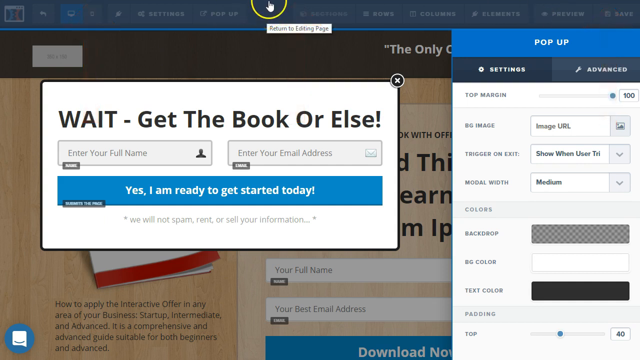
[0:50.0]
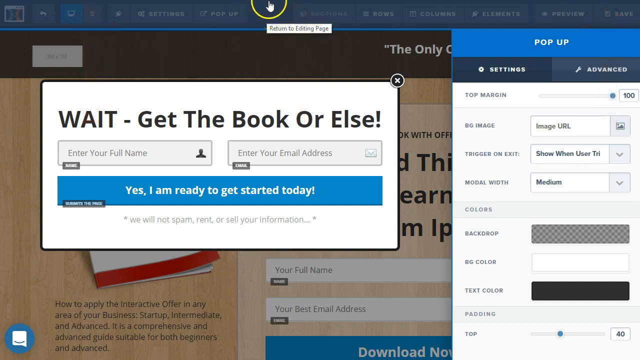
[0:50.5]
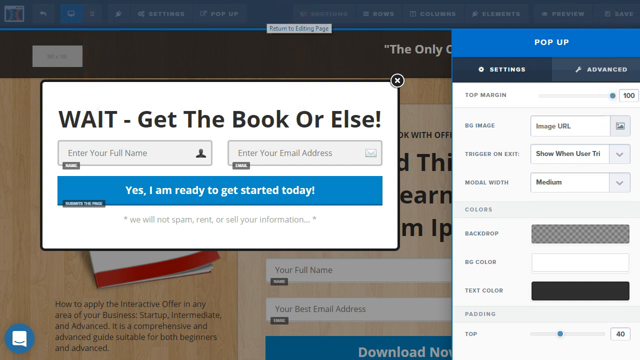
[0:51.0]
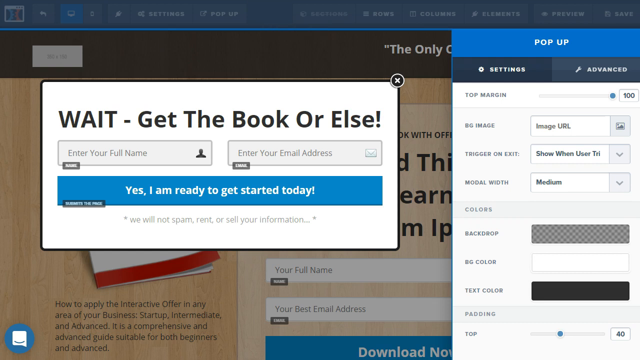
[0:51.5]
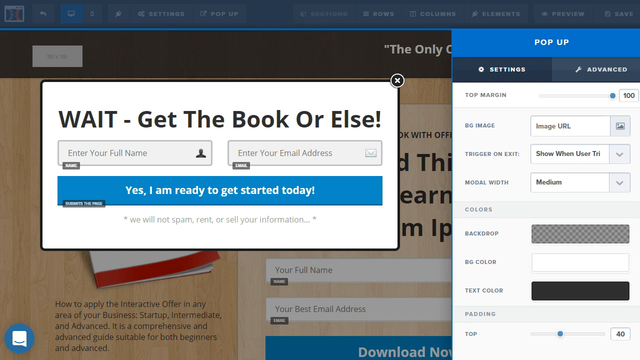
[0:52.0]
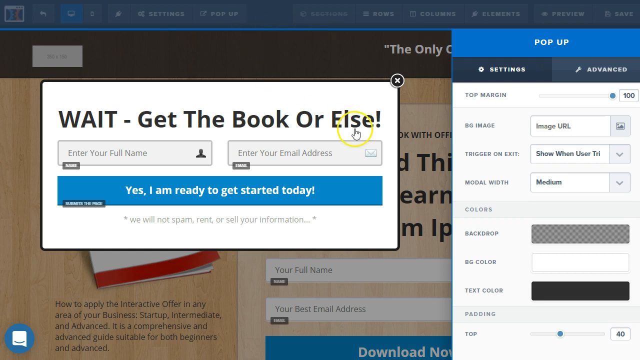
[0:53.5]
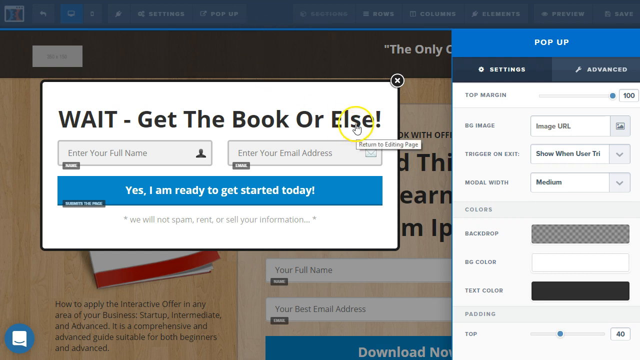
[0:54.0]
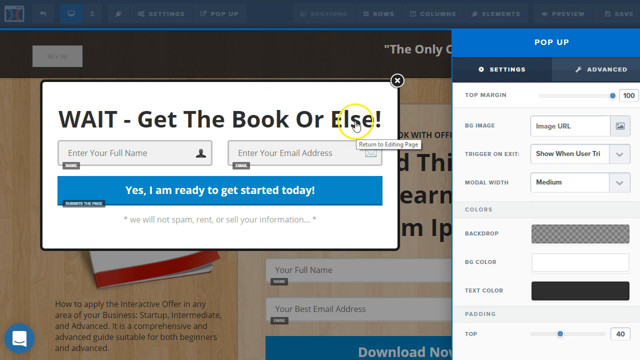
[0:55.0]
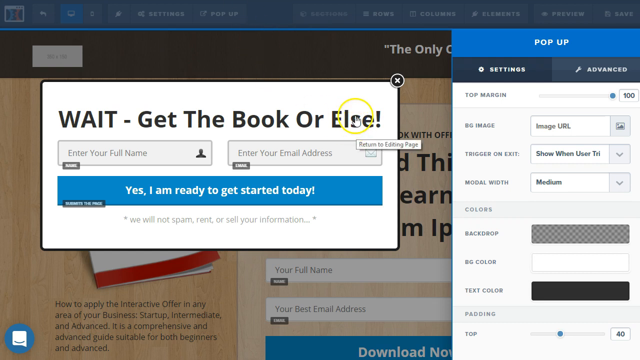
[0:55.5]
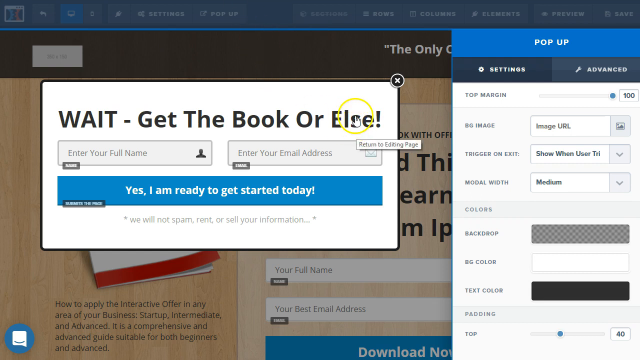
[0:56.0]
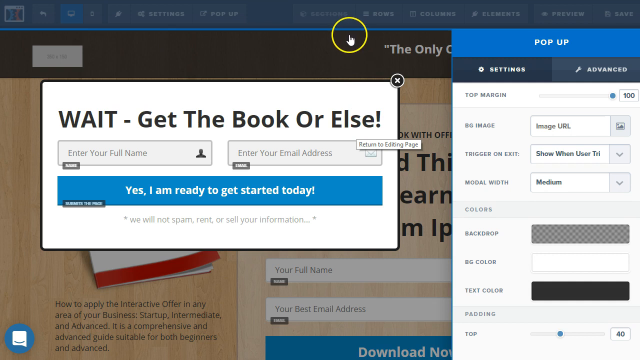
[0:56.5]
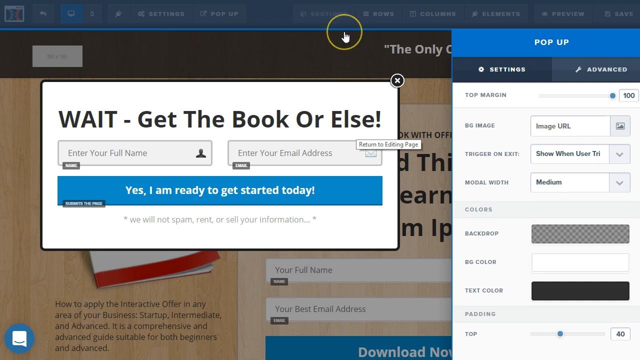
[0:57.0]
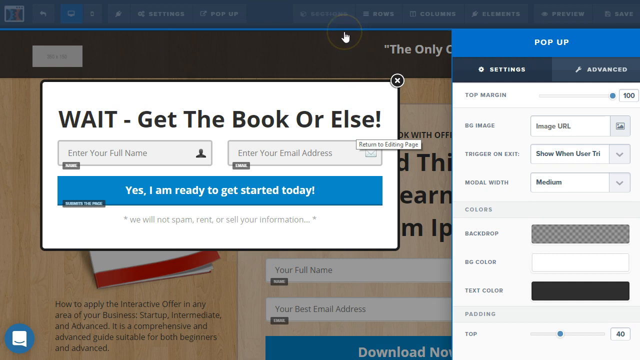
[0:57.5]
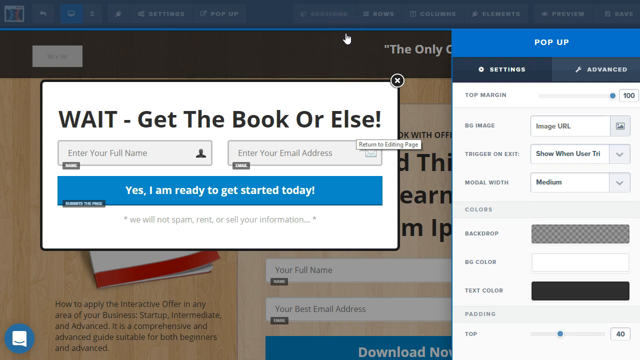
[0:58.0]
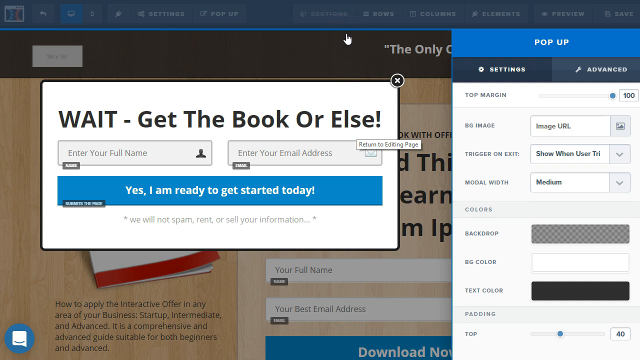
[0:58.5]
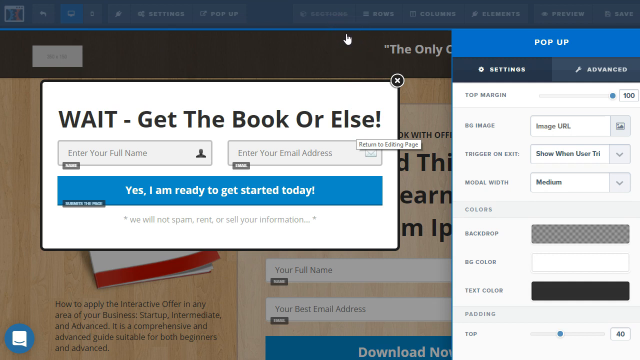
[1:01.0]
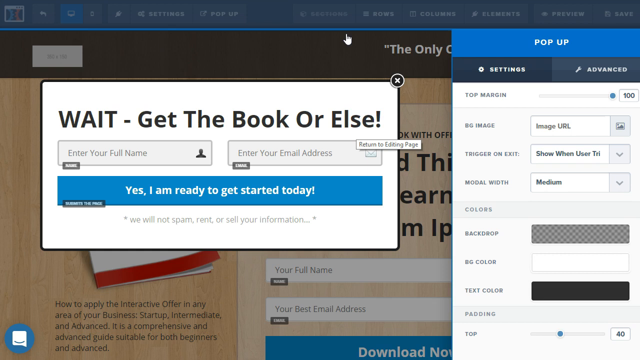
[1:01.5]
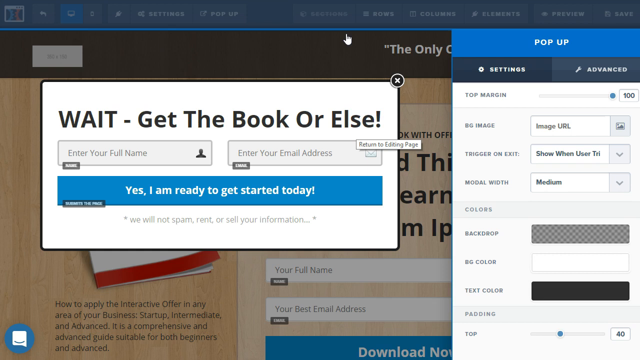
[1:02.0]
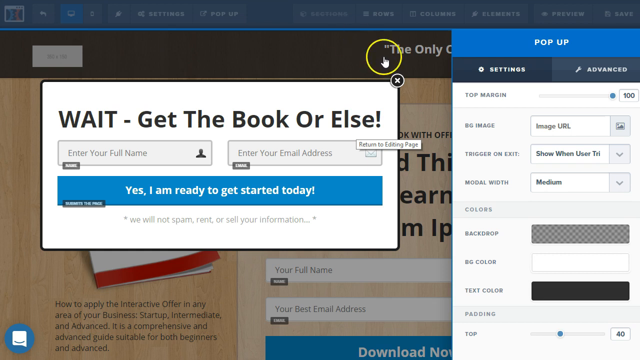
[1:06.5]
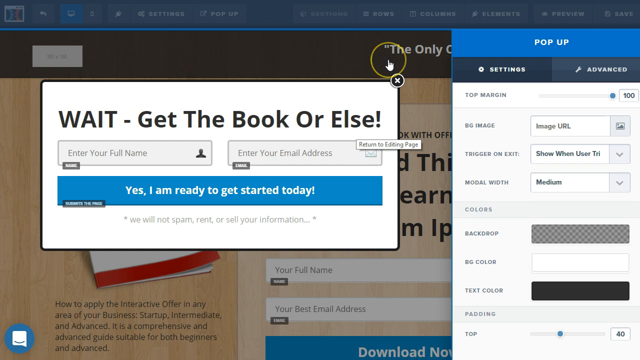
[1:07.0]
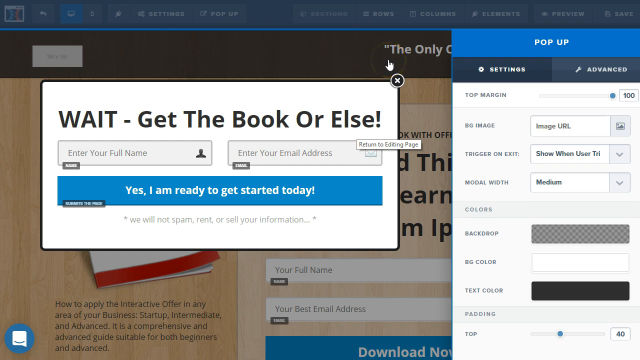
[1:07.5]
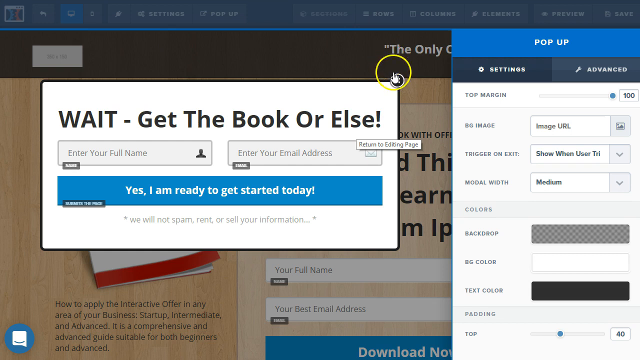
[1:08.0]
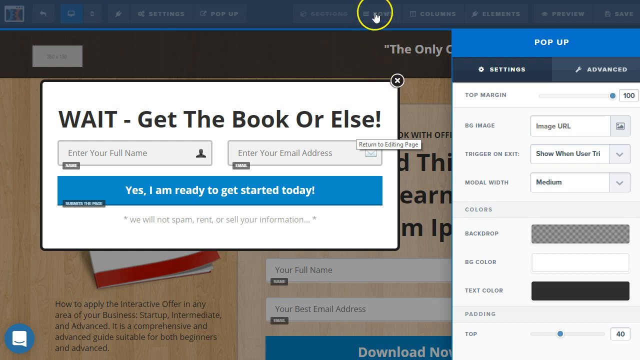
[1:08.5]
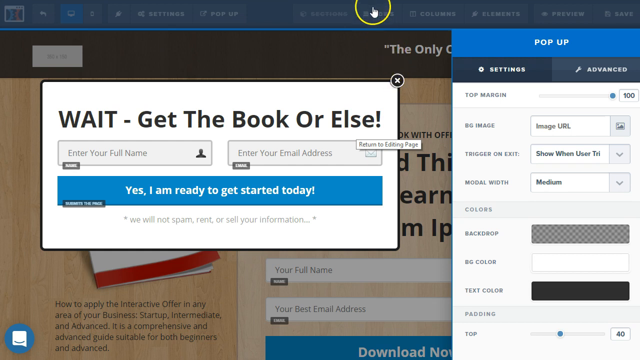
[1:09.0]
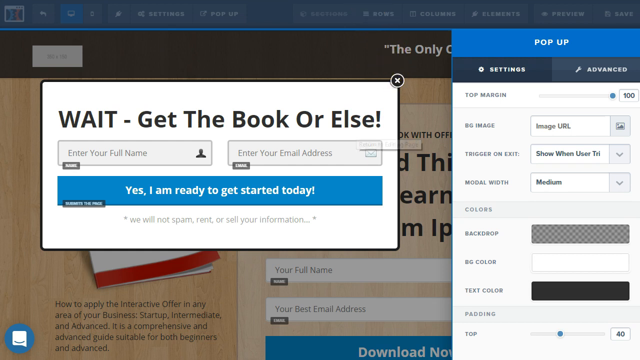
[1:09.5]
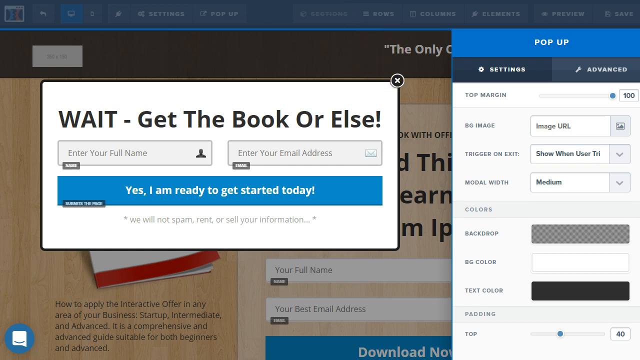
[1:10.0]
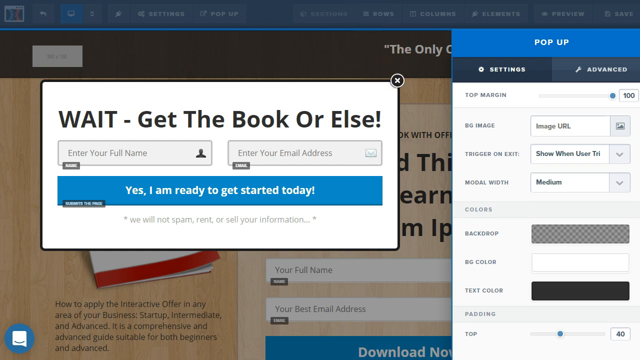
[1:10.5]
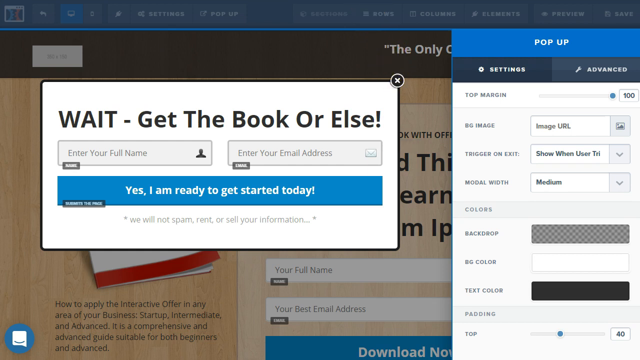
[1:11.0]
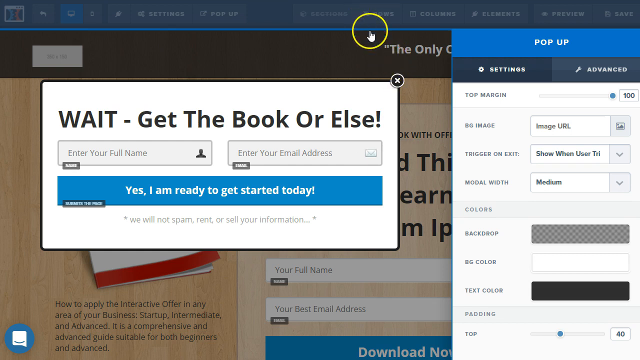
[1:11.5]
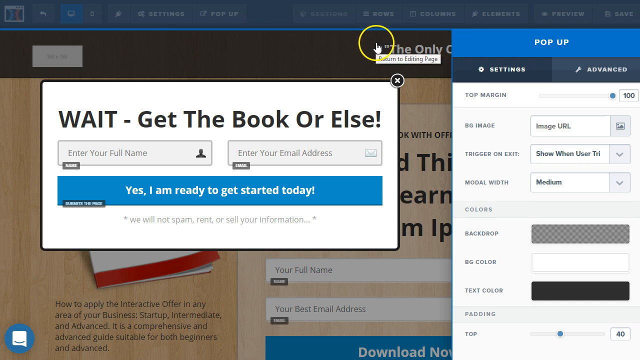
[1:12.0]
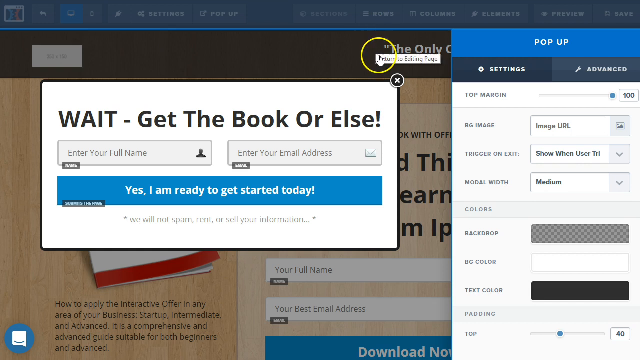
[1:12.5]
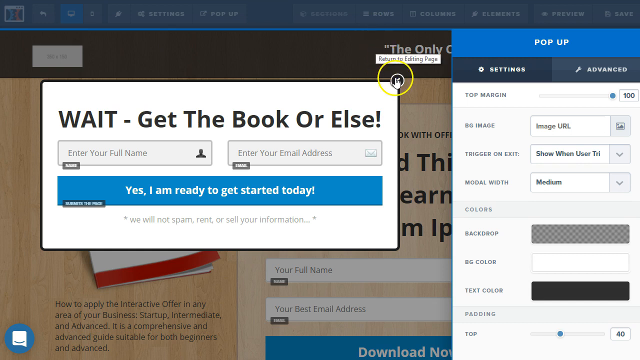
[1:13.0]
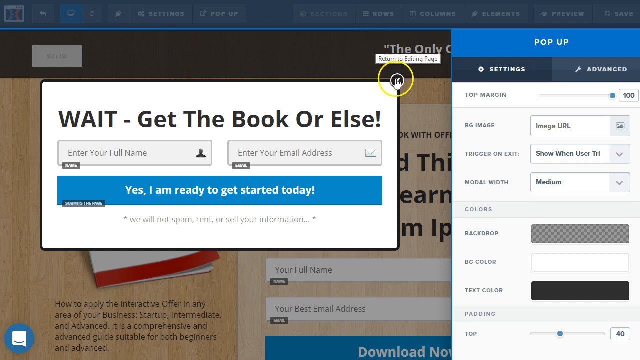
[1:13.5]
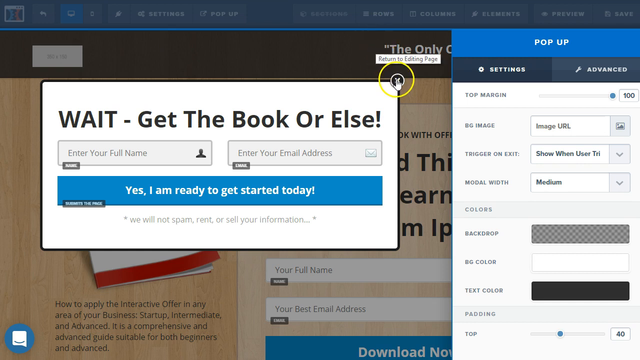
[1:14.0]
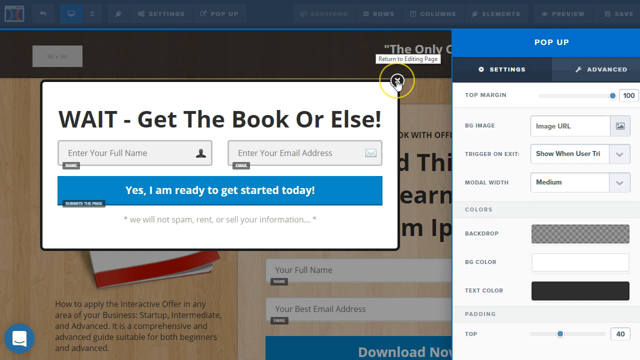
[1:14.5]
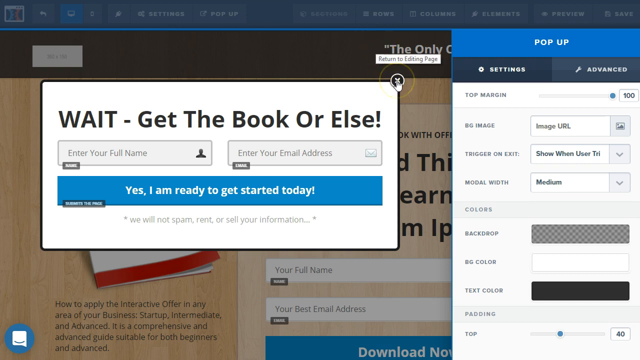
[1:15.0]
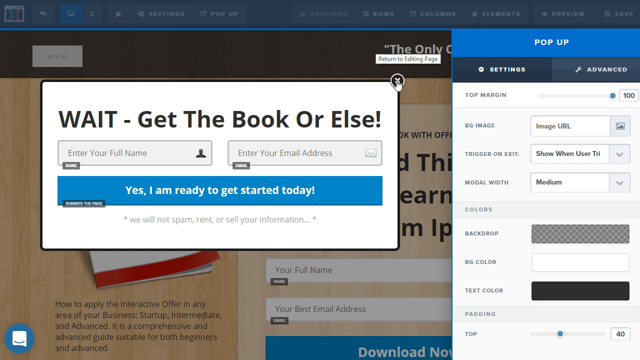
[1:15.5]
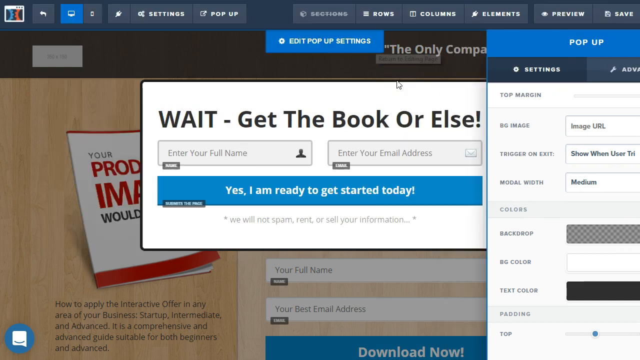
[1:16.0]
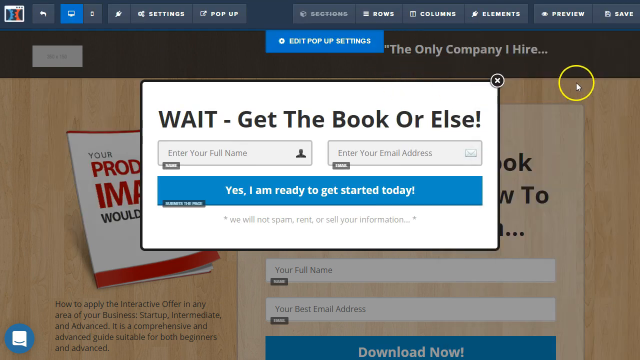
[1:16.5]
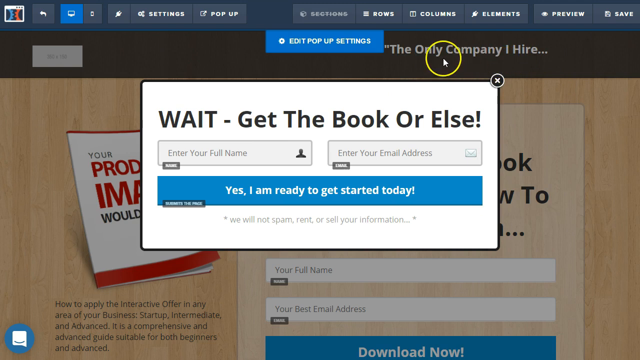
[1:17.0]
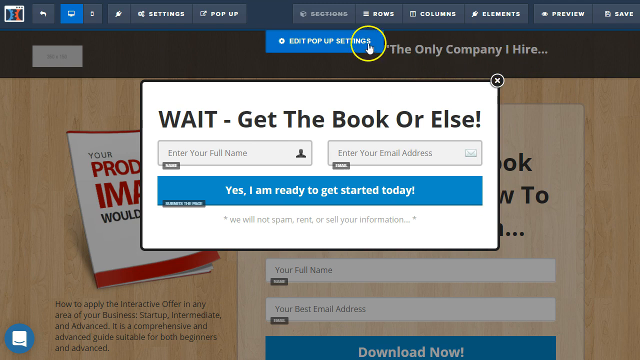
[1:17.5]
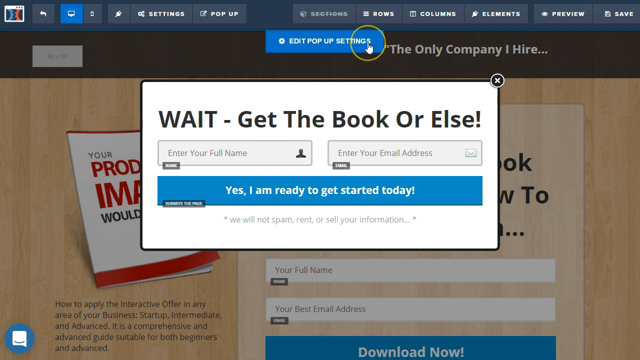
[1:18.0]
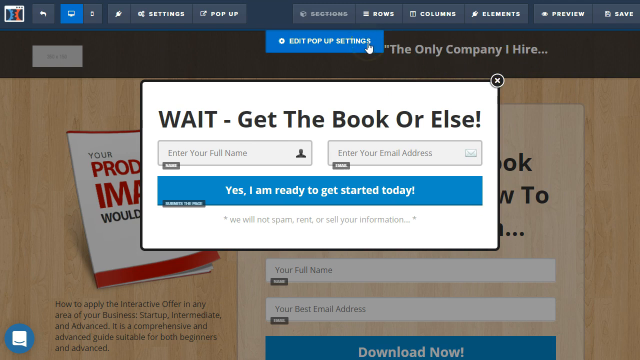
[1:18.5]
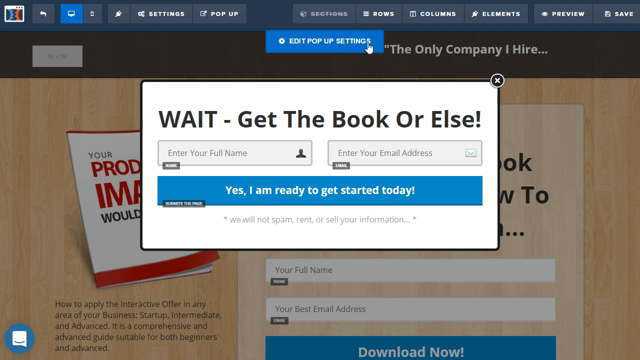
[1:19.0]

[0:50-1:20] A page is up on someone's screen with two pop-ups at the top, one on the left and one on the right. The cursor, marked with a yellow circle, goes down onto the word "else" in "wait get the book or else". As the cursor goes to the top the yellow disappears, and as it moves down the yellow is back. The person moves down and clicks the X on the first pop-up, and "edit the pop-up" pops up. The pop-up page comes back, the one that says "pop-up", where the BG image and the trigger on exit can be changed; it says "show when user try" and then cuts off. The modal width is "medium", and the backdrop, BG color and text color can also be adjusted in that section.